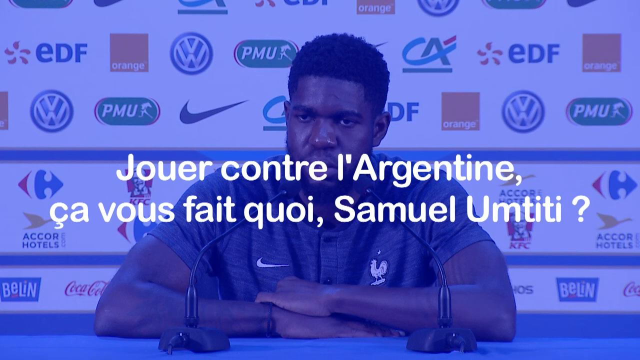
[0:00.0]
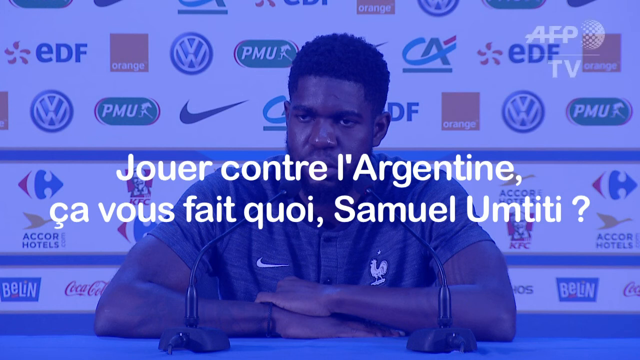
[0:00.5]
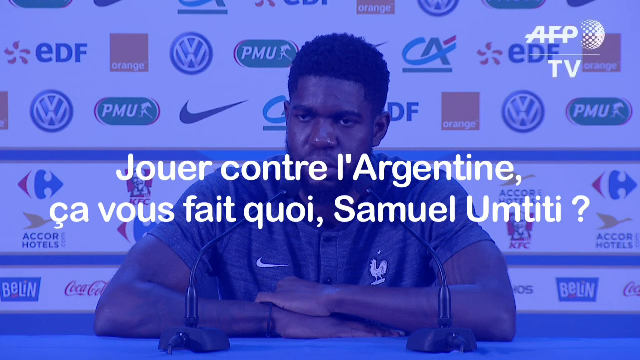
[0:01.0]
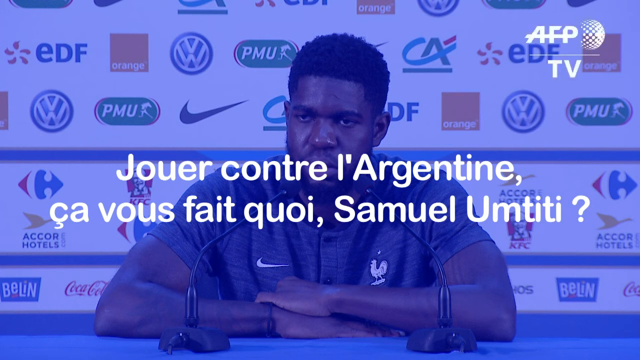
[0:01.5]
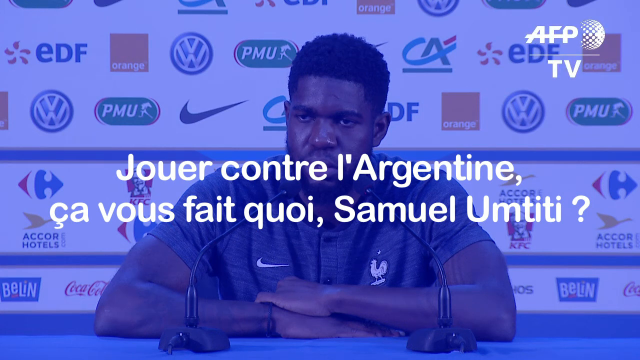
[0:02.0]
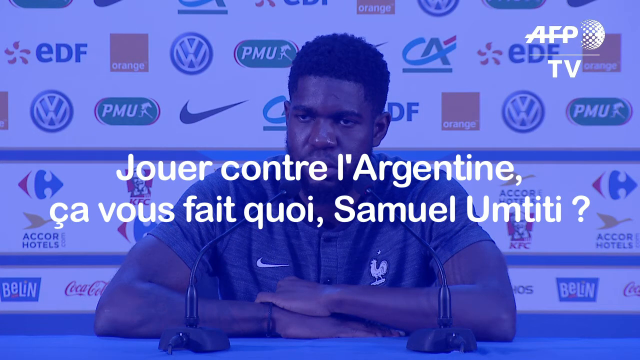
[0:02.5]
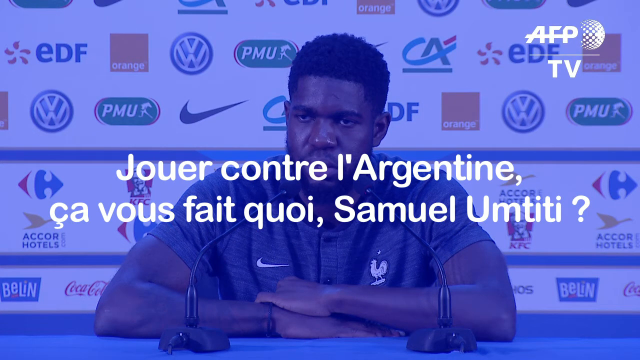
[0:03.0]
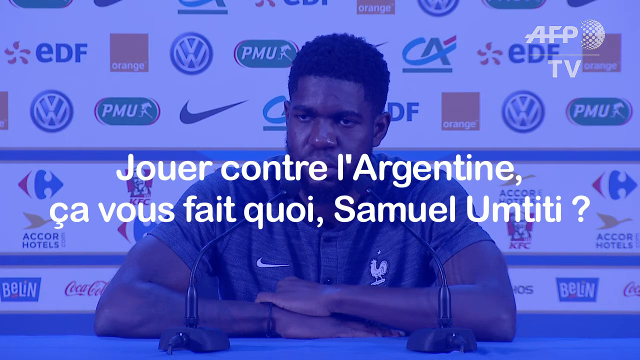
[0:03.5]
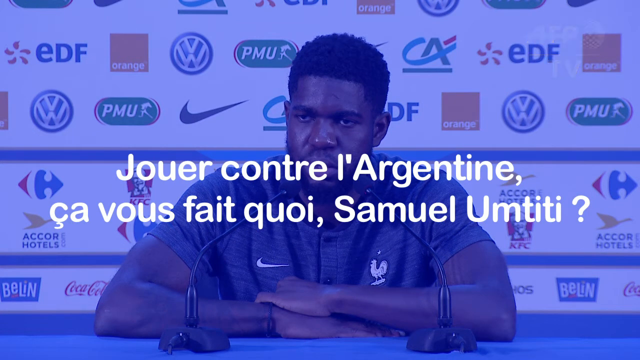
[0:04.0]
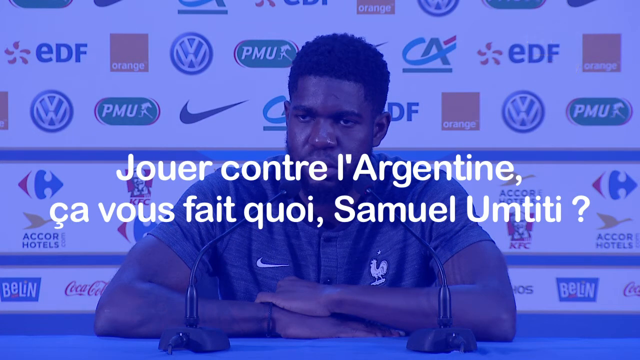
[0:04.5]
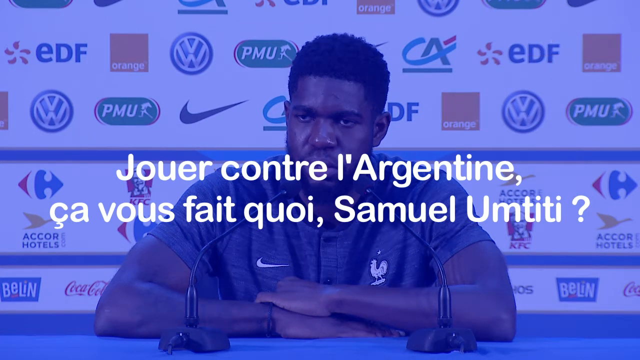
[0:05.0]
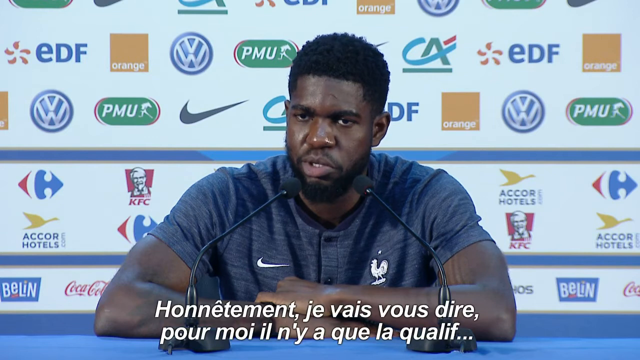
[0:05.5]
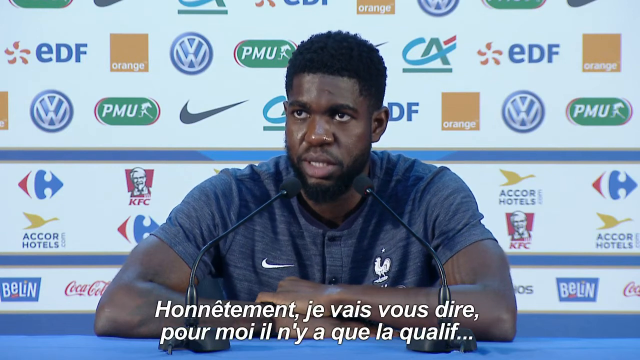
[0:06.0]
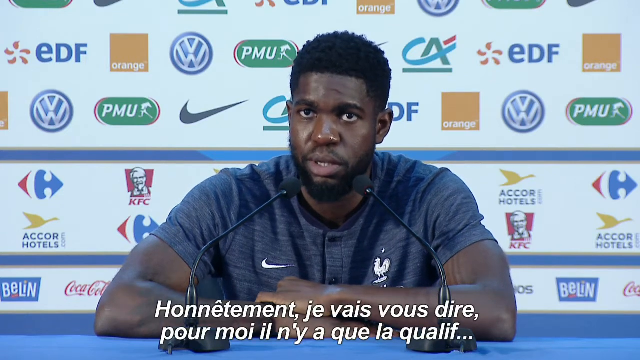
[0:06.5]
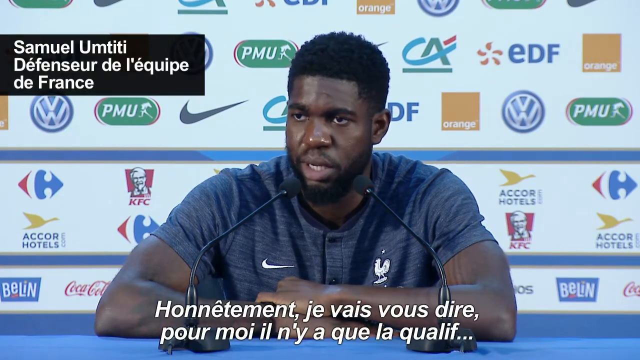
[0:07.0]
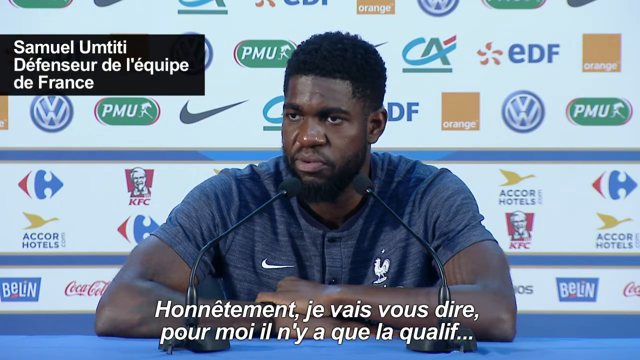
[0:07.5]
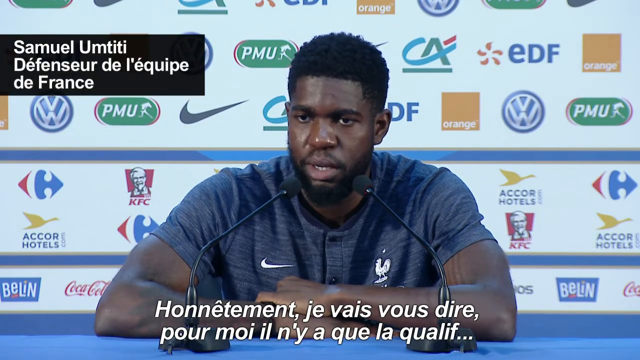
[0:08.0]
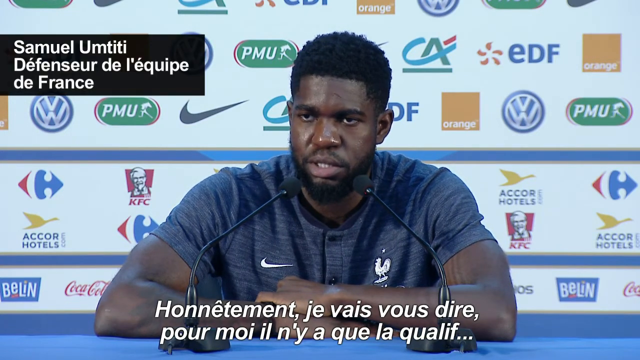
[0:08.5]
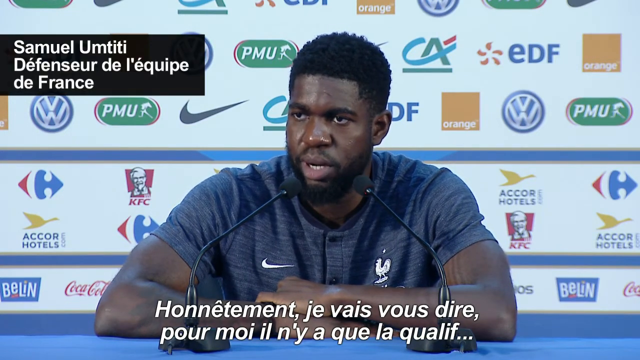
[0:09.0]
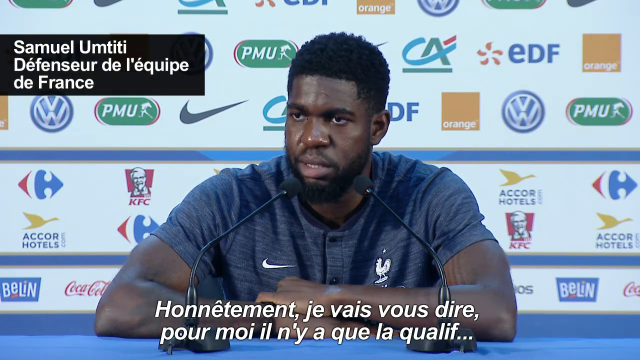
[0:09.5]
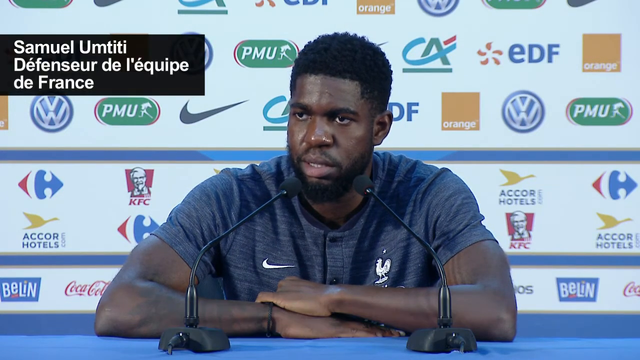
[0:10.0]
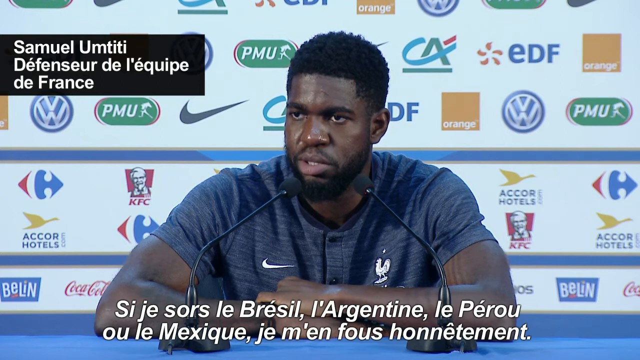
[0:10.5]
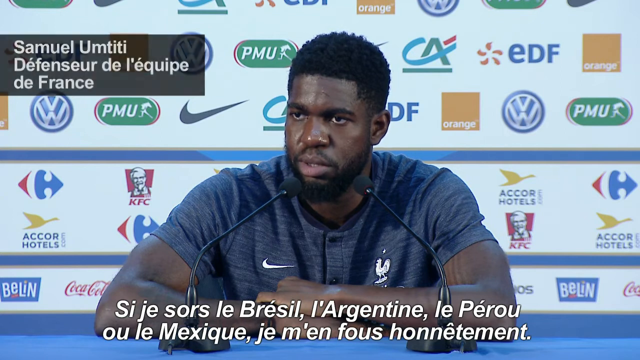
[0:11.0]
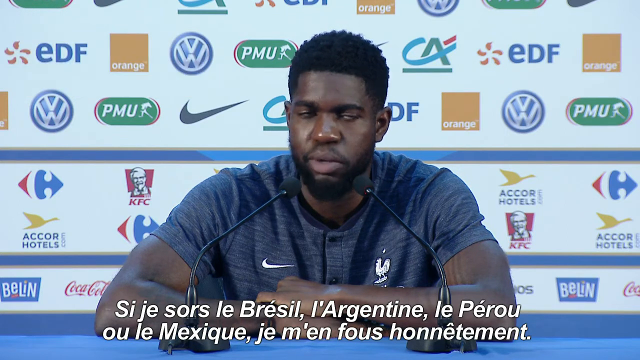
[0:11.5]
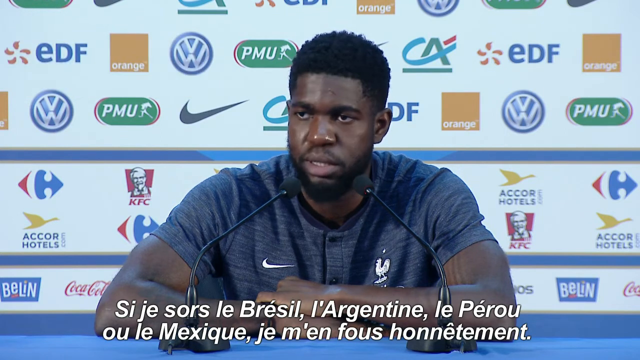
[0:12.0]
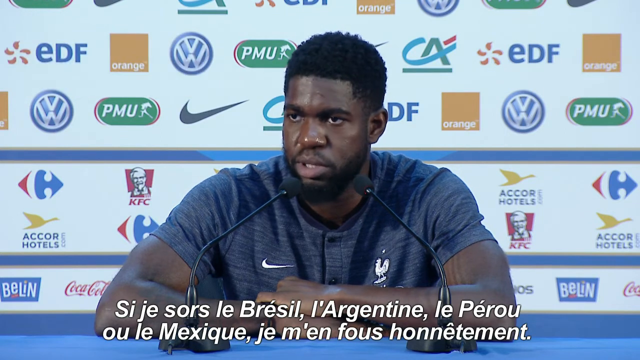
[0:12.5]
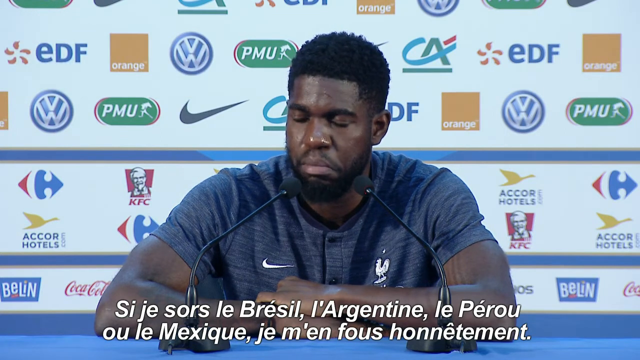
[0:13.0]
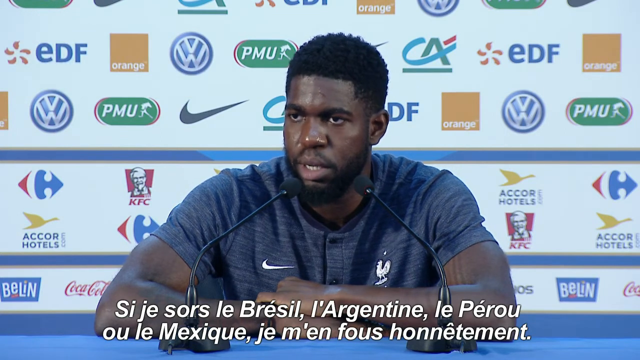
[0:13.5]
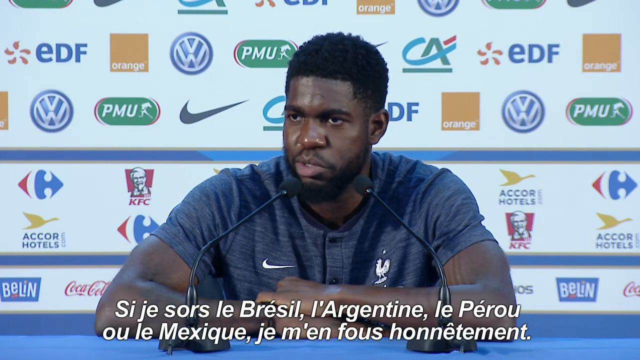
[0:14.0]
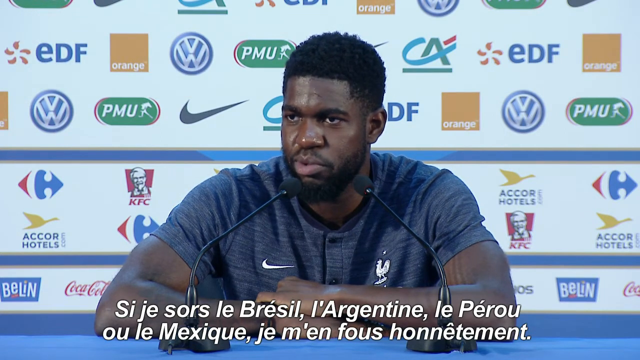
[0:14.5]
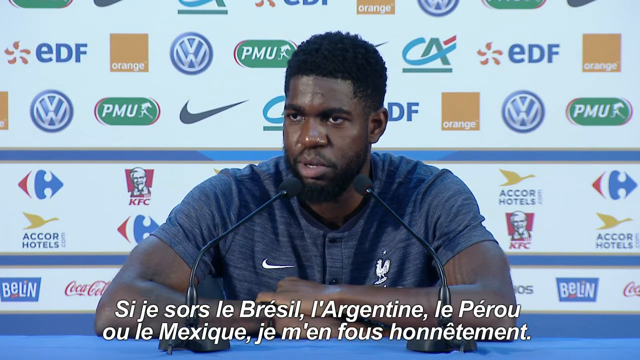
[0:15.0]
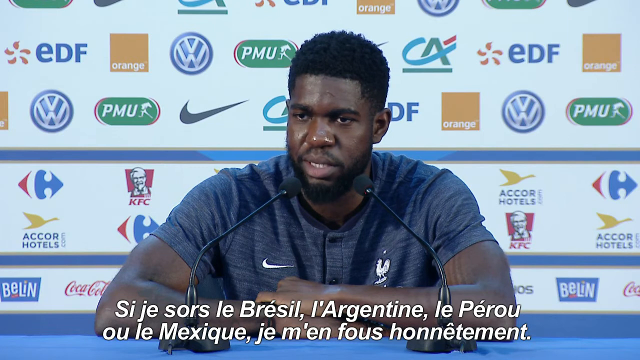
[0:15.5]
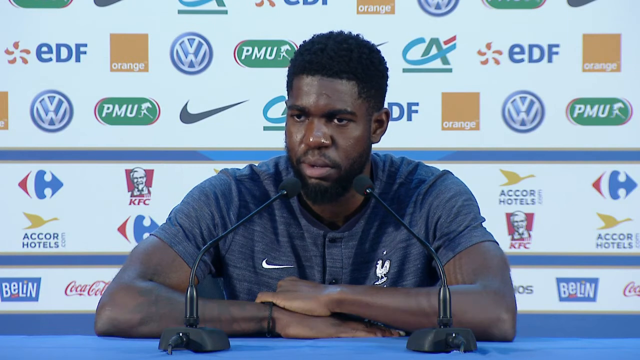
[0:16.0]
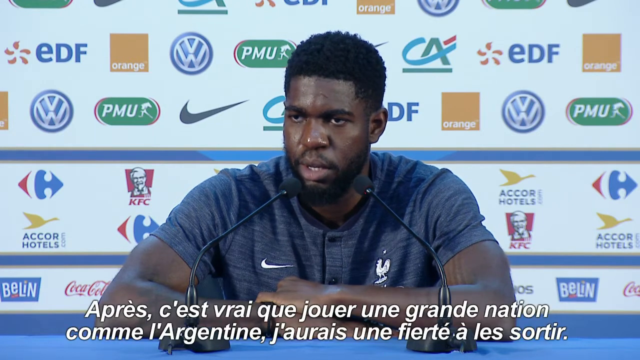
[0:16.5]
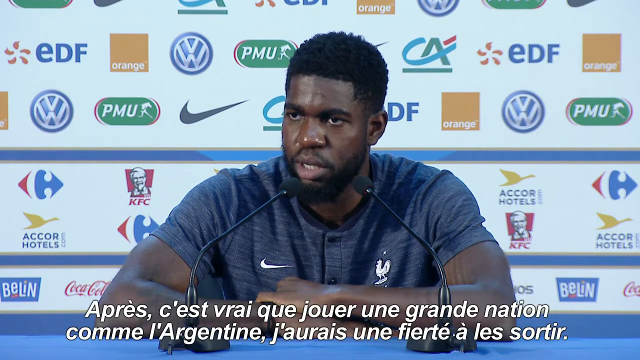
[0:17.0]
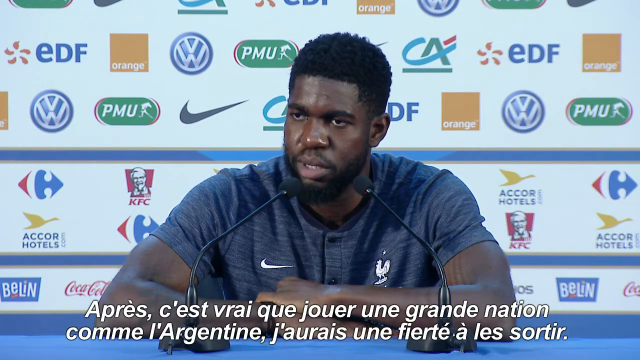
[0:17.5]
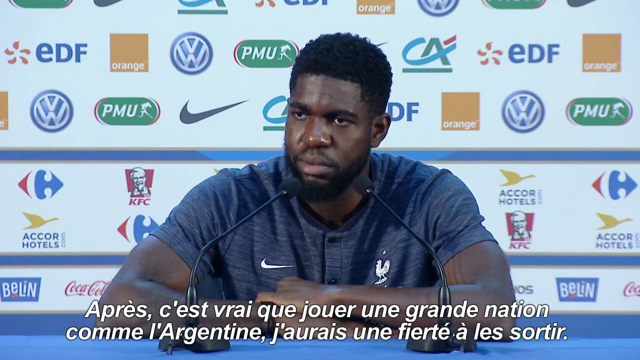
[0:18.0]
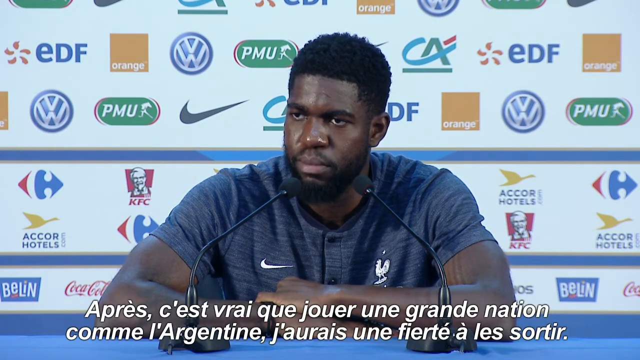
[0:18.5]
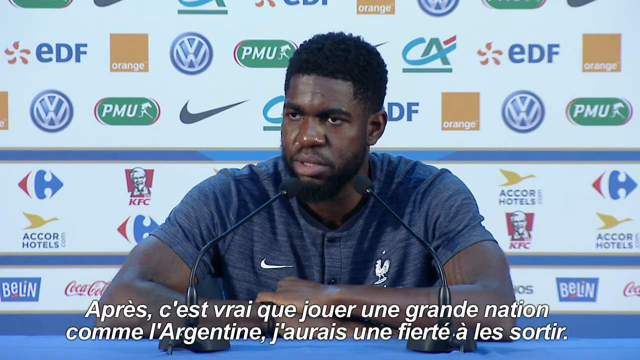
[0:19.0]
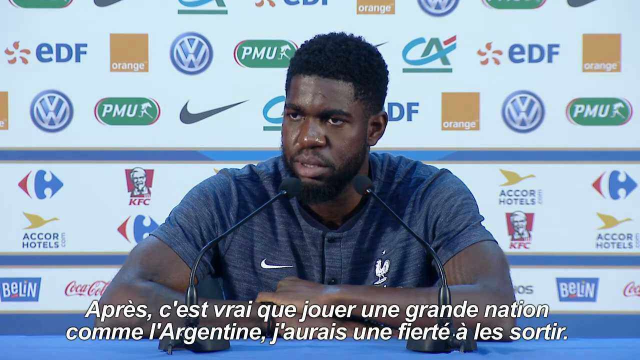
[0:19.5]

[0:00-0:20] A Black sports player sits on a stage for an interview, with a couple of desktop microphones aimed at him. He has short black hair and a full beard, wears a blue jersey, and has his arms crossed. A blue coloring over the screen shows a question, and sponsorship logos are behind him. As he starts talking, captions appear at the bottom, and then a caption in the upper left states who he is: "Samuel Umtiti, defense player for France." He looks up for a second as he responds, then looks back down at the person asking. His eyes are not very expressive, laser focused and deadpan, and he makes few body movements, just a slight head movement forward. He looks forward as he thinks, then back at the person asking, with a slight head shake; his mouth is slightly open as he answers. He looks left, then back to the center at the reporter, leans his head slightly and shakes it as he answers, with another little head shake as he continues. He closes his eyes in a very slow blink, looks back at the reporter while answering, gives another soft head shake, and then a slight shrug.